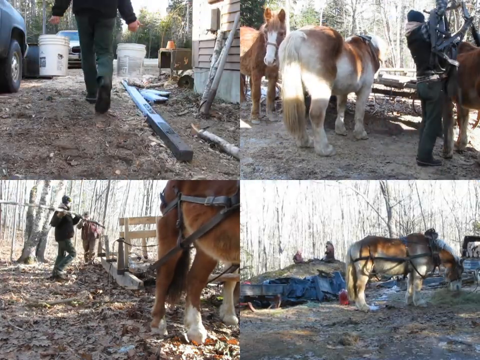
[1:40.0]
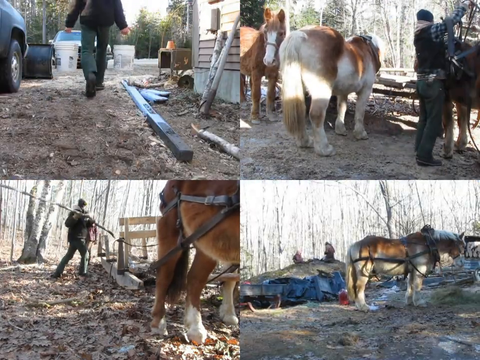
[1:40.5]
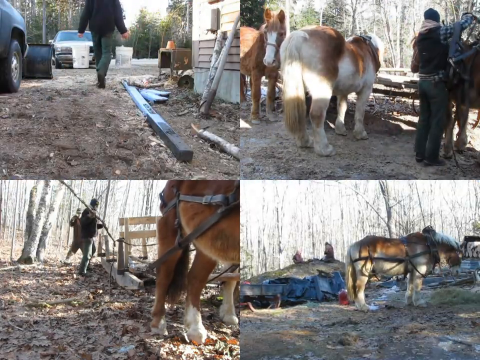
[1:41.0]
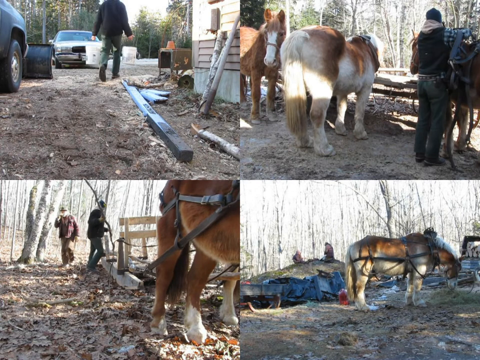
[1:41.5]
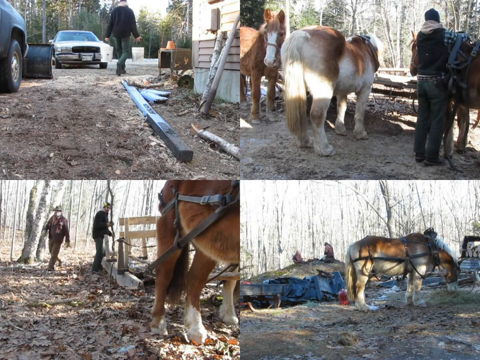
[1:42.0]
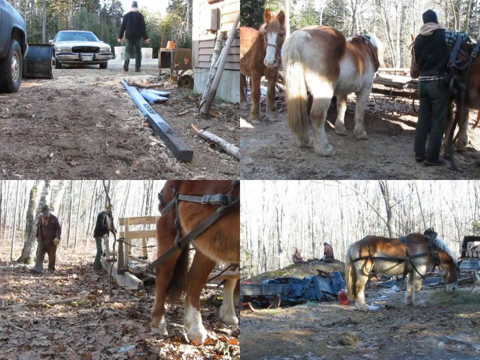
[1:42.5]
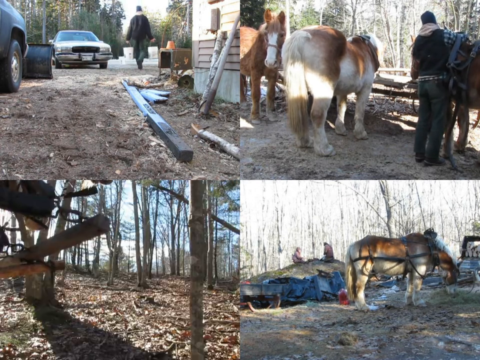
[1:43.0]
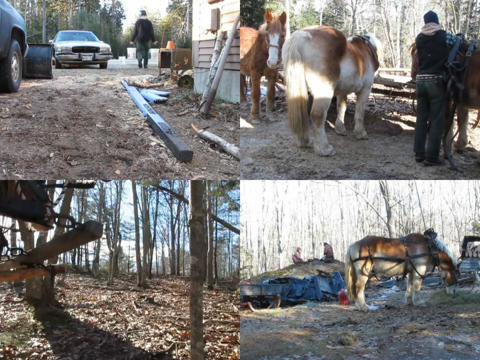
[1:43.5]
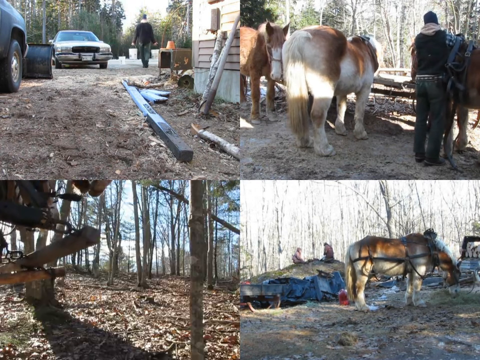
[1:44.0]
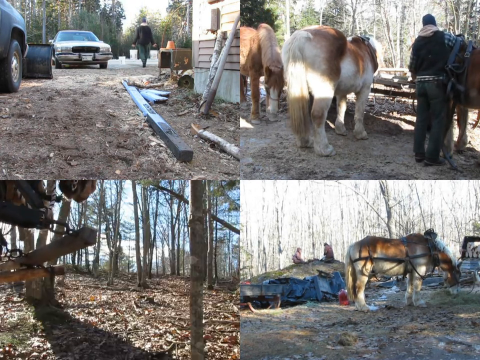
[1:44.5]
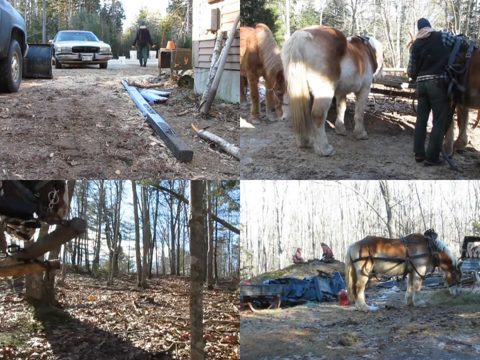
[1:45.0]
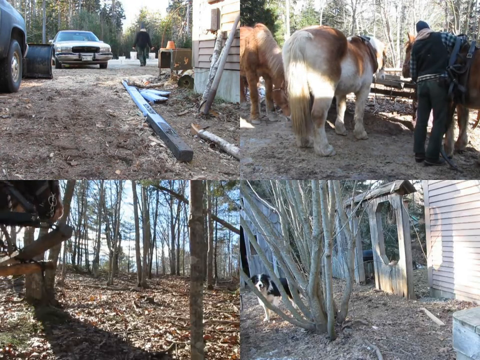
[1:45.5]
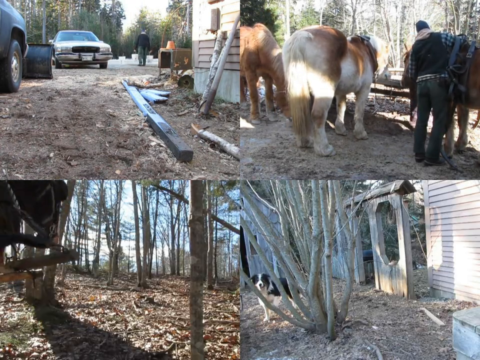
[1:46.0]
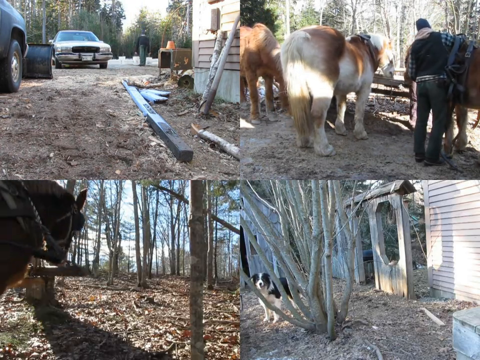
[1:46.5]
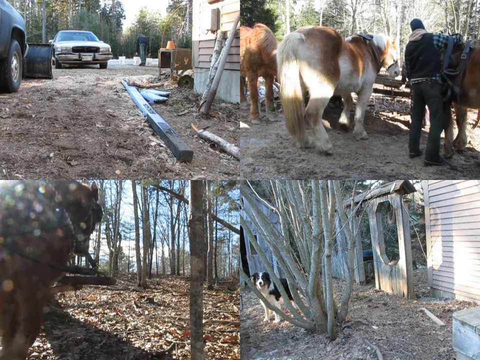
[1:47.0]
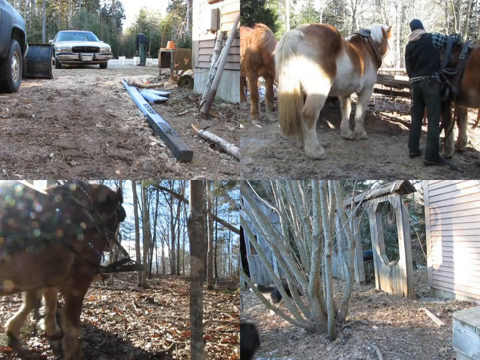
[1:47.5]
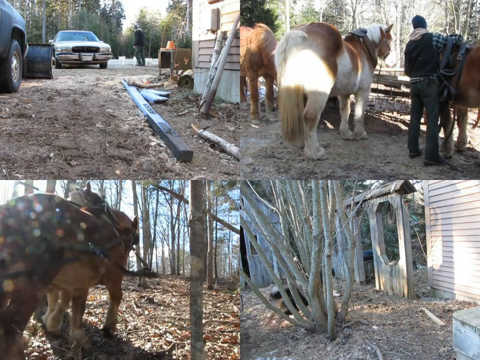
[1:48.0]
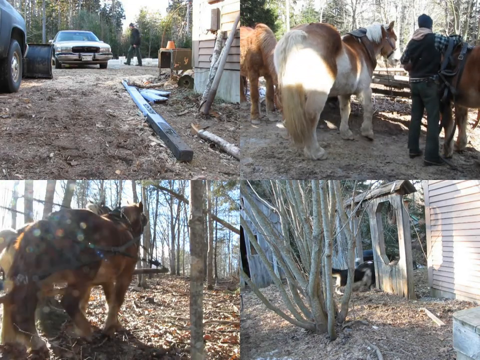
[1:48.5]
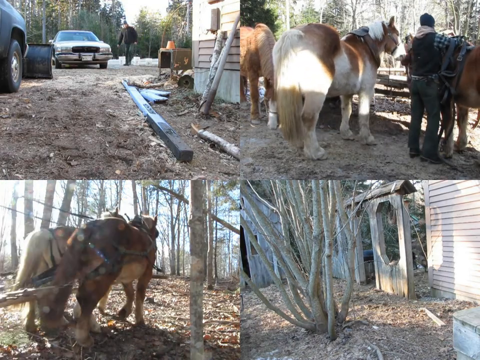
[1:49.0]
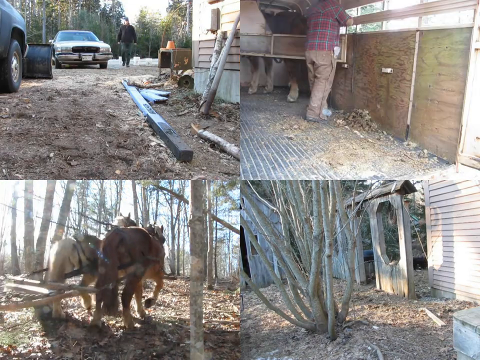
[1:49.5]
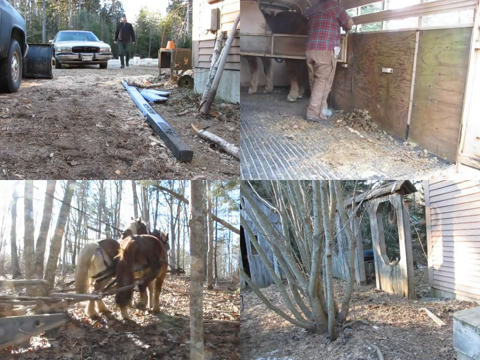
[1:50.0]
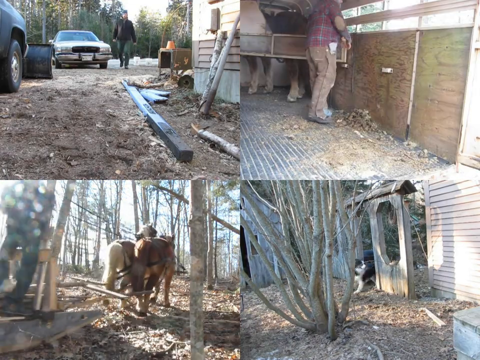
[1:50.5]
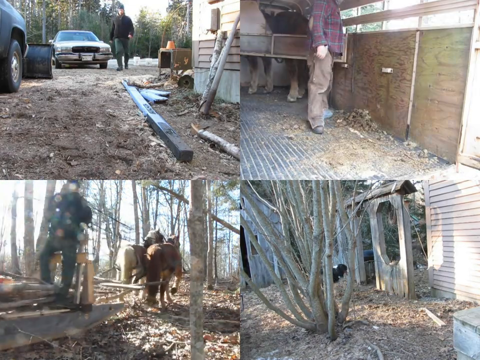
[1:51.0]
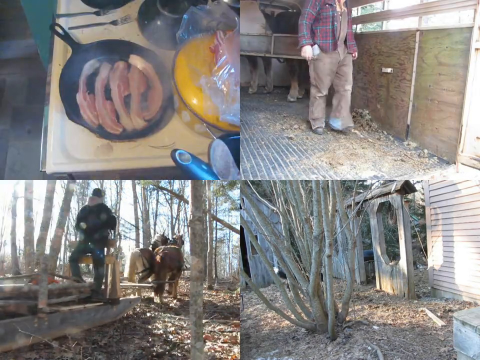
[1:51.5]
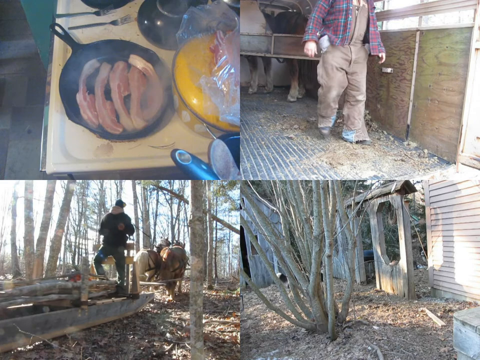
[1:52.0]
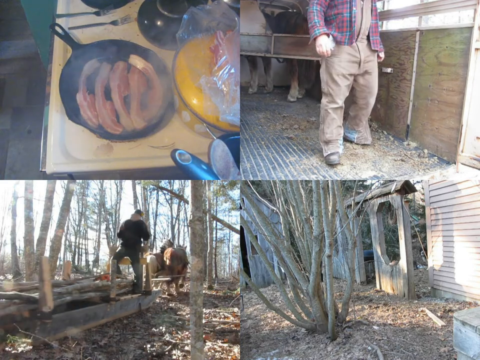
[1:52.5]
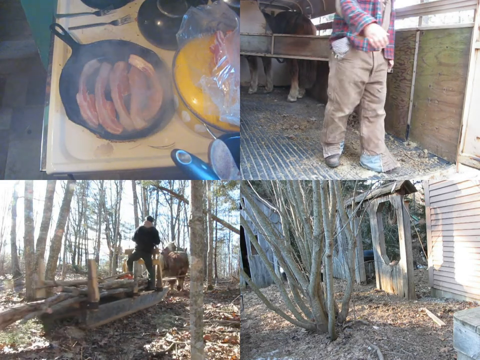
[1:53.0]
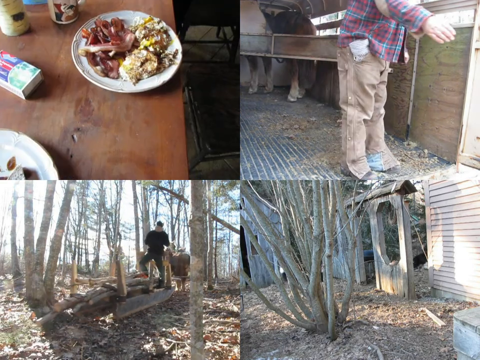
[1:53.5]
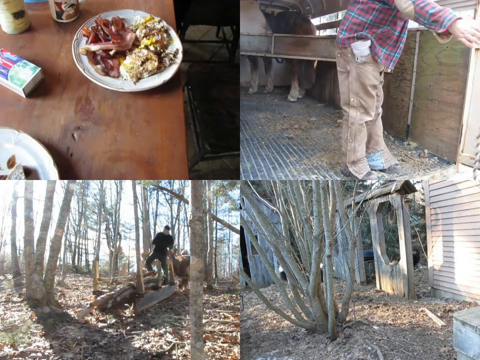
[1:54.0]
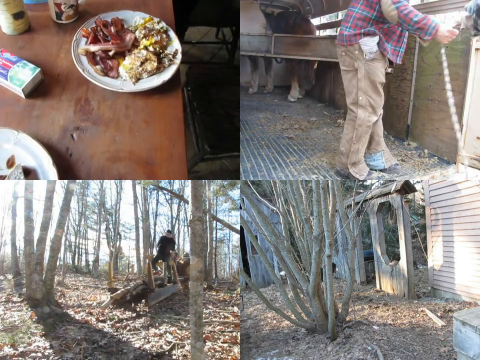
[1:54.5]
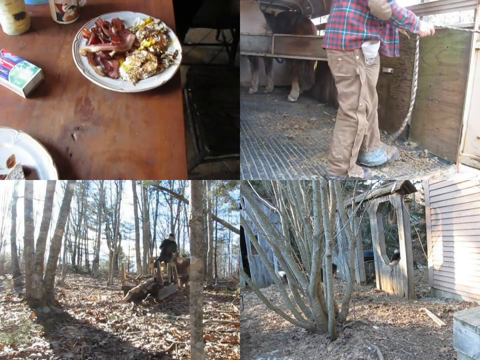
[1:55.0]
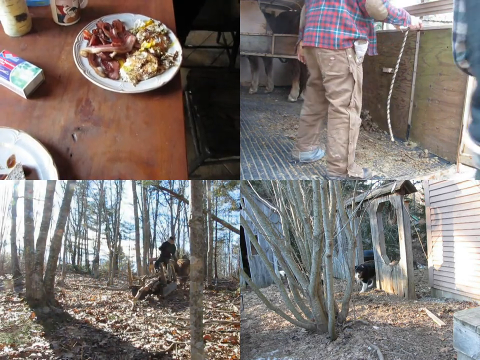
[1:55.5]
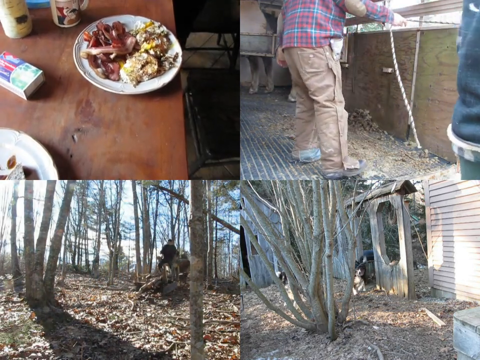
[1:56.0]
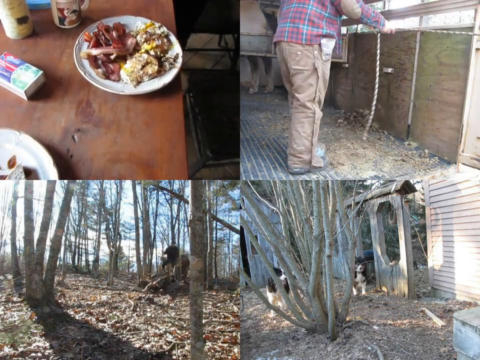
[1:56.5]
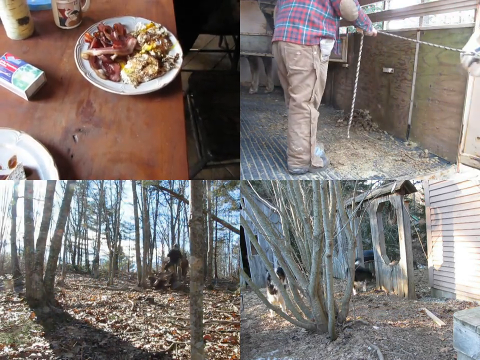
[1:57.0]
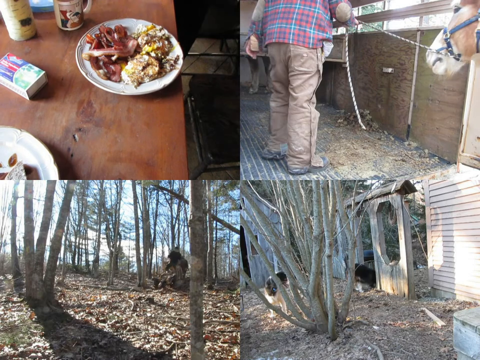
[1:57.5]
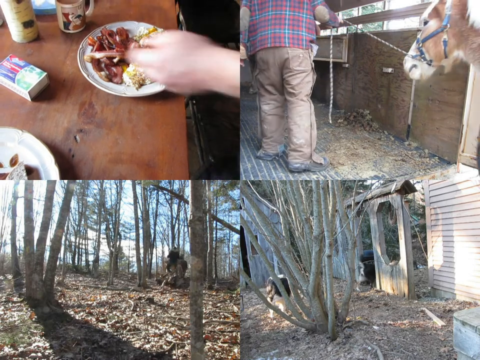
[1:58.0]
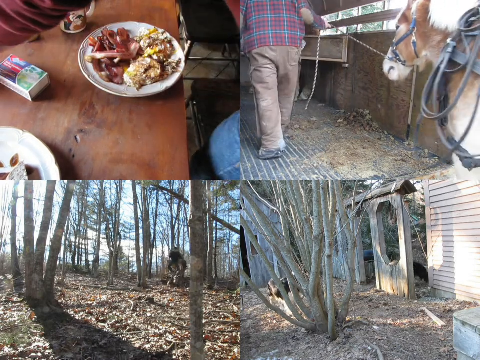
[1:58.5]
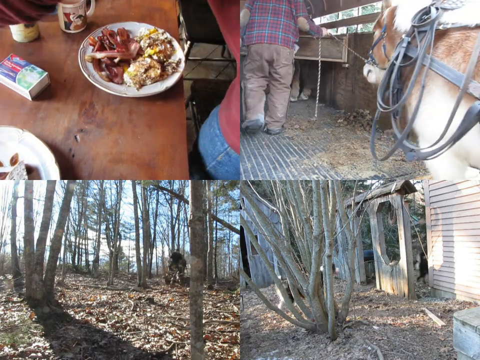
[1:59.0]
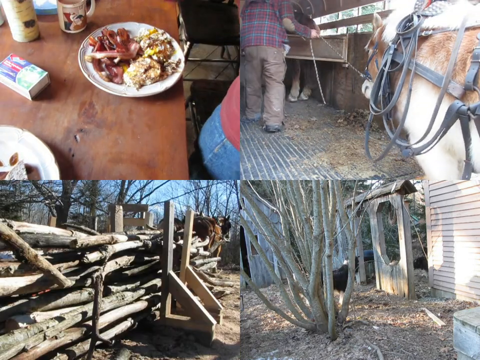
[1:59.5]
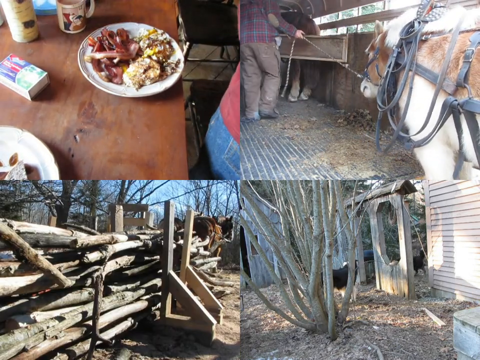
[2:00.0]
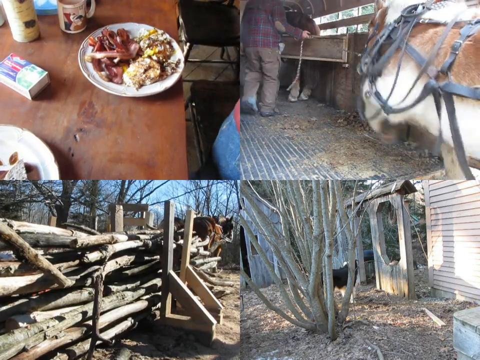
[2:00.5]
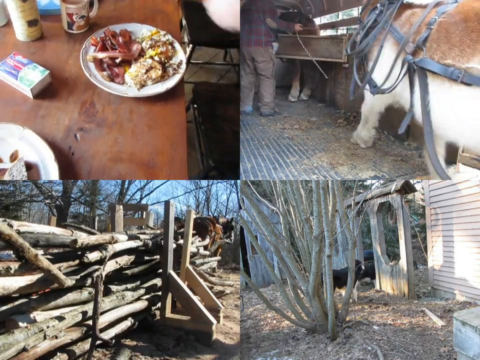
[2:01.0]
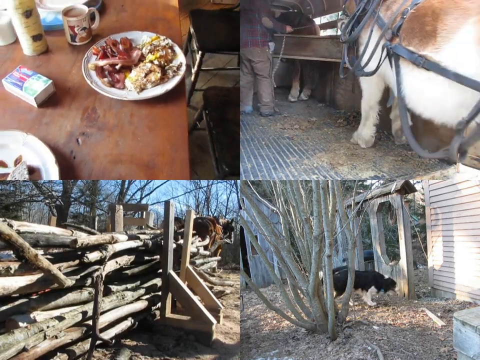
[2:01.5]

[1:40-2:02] The screen is still divided into four sections. One section shows a man walking, with the black truck visible on the left in the background. The top right shows, on the left, the two horses that were attached to the cart and, on the right, another horse that the man is tending to. The bottom left shows two men in the background with the cart attached to the horses, one of them carrying a long wooden branch; one horse is visible, but the harness is attached to the cart, so presumably the other horse is there. In the bottom right, a horse stands next to what appears to be generic farm debris and looks like it is eating some grass. The bottom left cuts to the two horses attached to the cart walking through the forest again, while the top left and right screens remain in the same basic scene. The bottom right changes to a scene of a house: a bush or a tree with no leaves is in the foreground, behind it on the right is the siding of a house, to the left is the barn, and in the middle is a walkway that presumably leads to either the fields or the backyard. A dog is running around in the bottom right. The top left switches to bacon cooking in a cast iron skillet. The top right shows a man standing in a barn with the horse behind a little barrier behind him, and the bottom left shows a man standing up in the cart with pieces of wood, driving the horses. Two dogs are now playing in the bottom right. In the top right, a man leads a horse into the area with the other horse, which looks like a barn or possibly a transportation vehicle; it is hard to tell. The top left shows a cooked plate of food including bacon and what appears to be possibly eggs in the top right section.